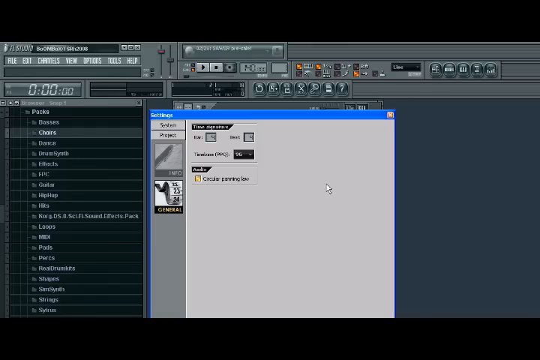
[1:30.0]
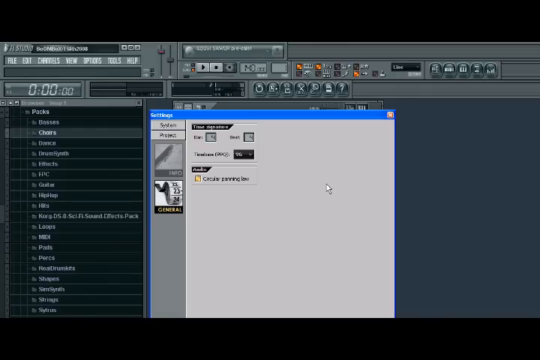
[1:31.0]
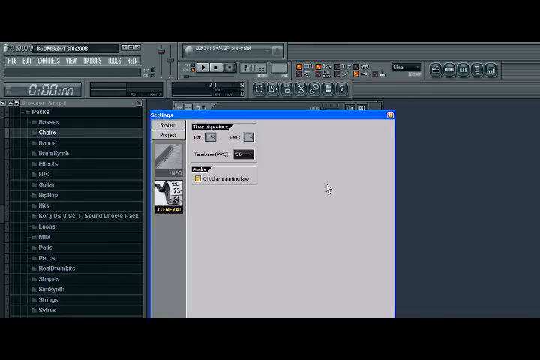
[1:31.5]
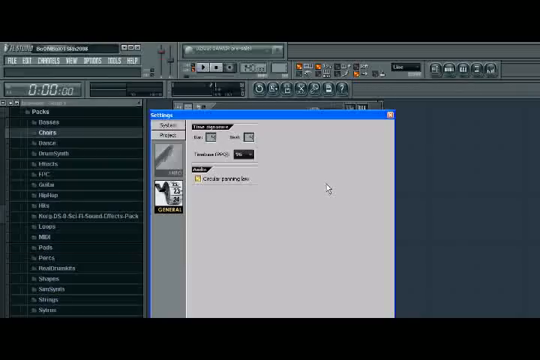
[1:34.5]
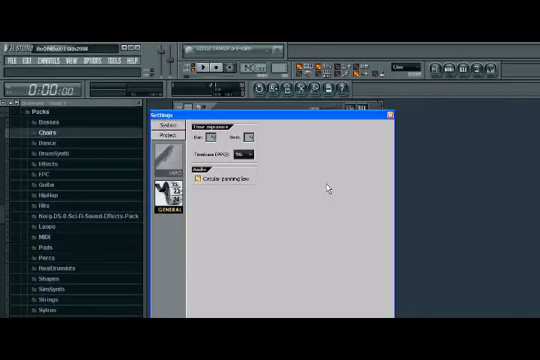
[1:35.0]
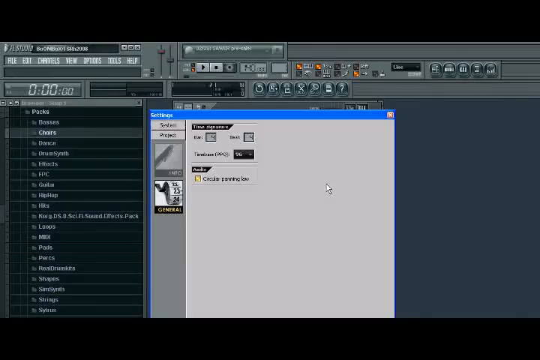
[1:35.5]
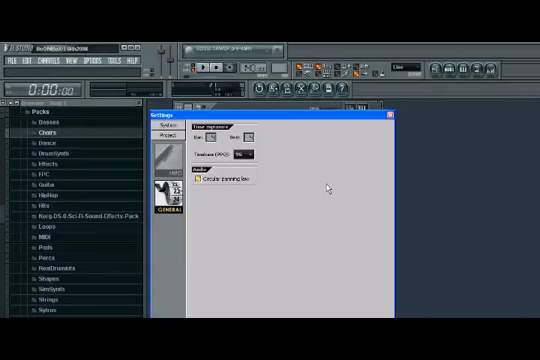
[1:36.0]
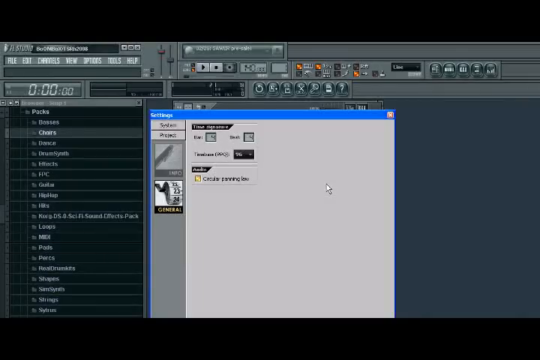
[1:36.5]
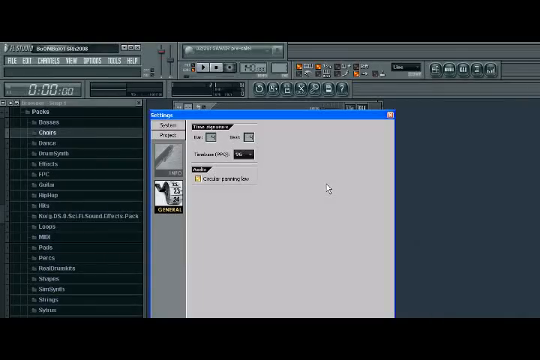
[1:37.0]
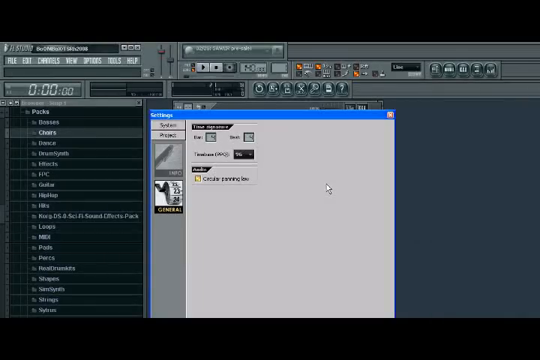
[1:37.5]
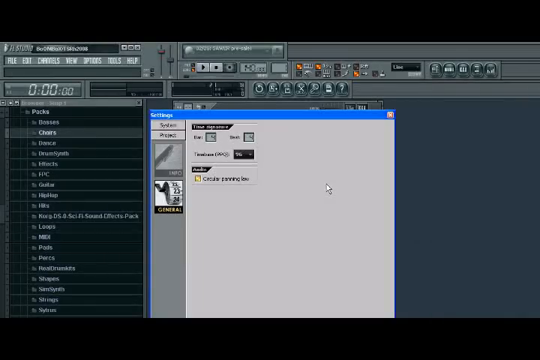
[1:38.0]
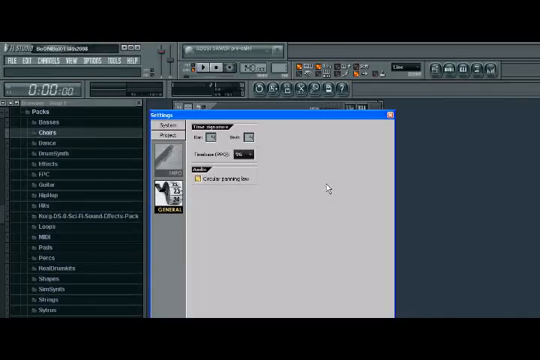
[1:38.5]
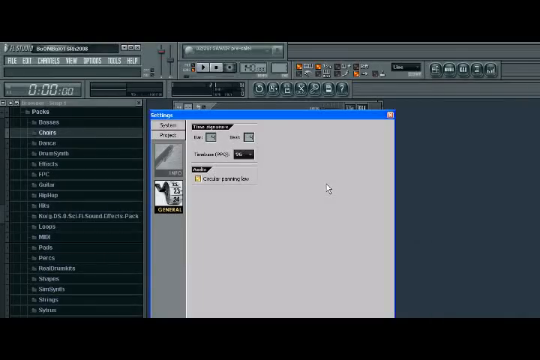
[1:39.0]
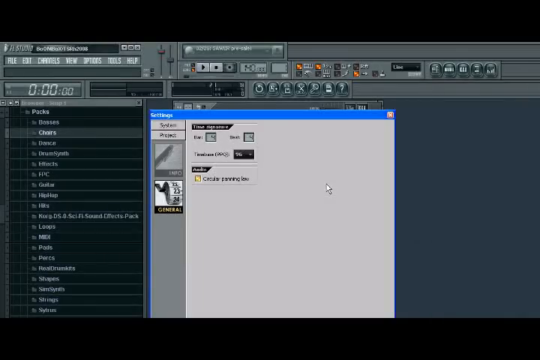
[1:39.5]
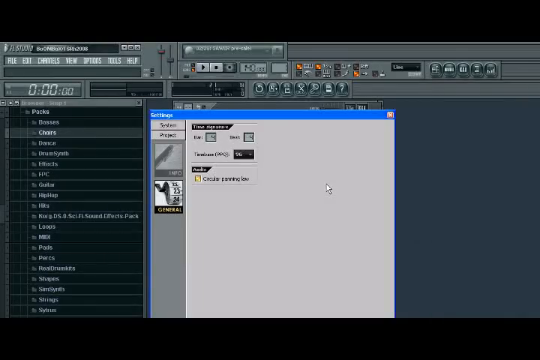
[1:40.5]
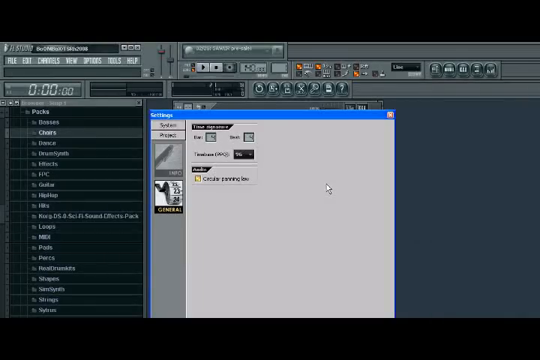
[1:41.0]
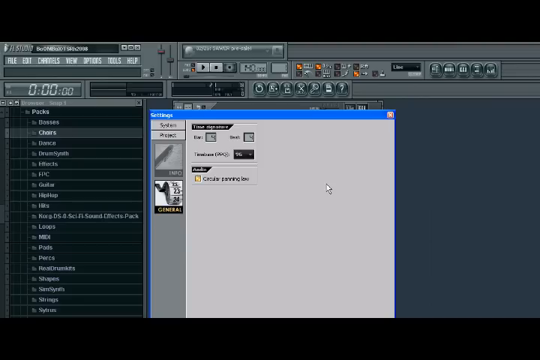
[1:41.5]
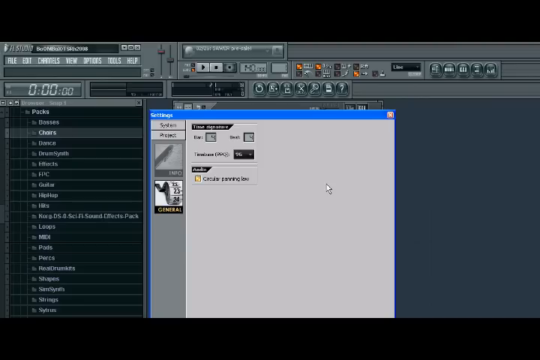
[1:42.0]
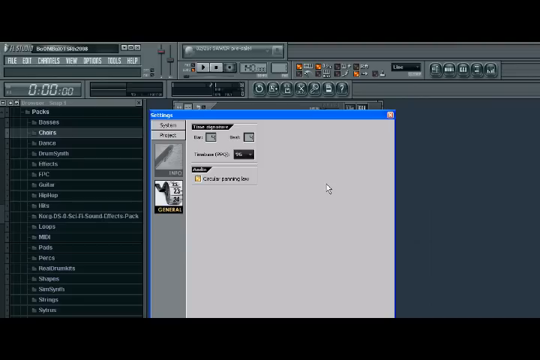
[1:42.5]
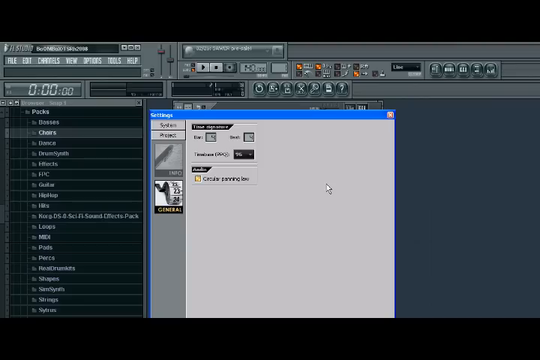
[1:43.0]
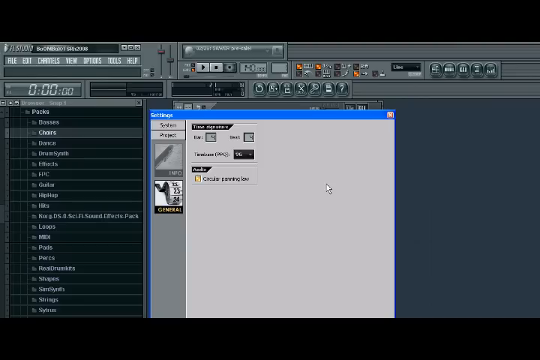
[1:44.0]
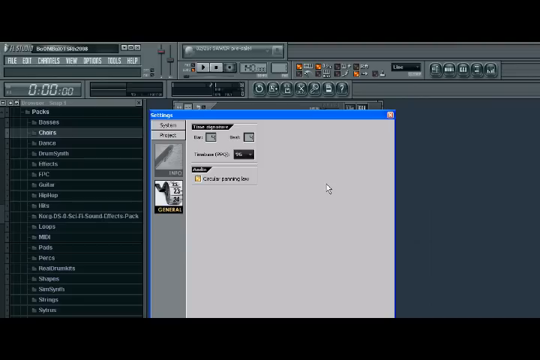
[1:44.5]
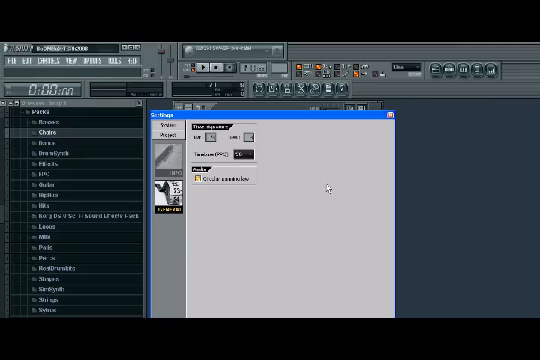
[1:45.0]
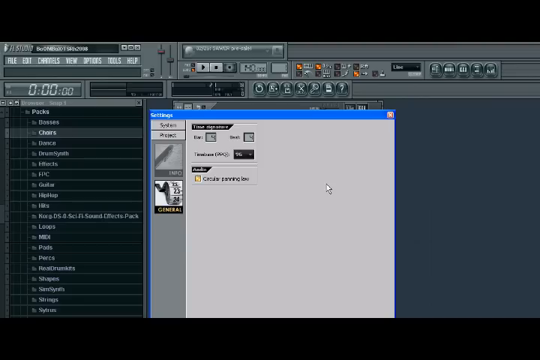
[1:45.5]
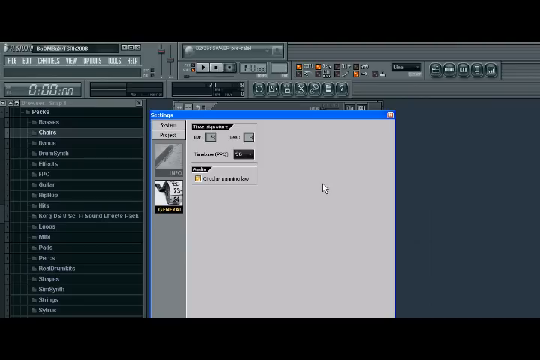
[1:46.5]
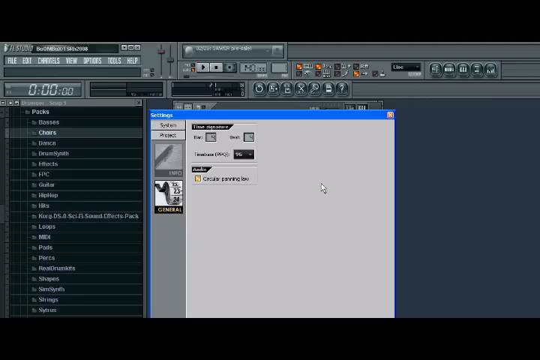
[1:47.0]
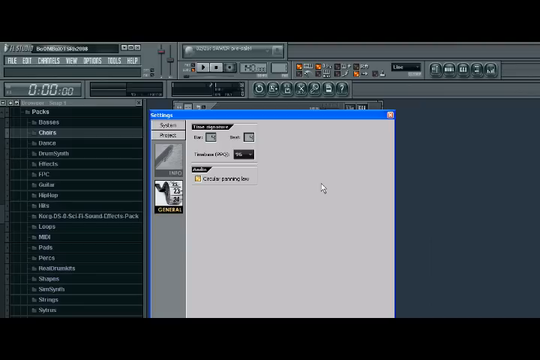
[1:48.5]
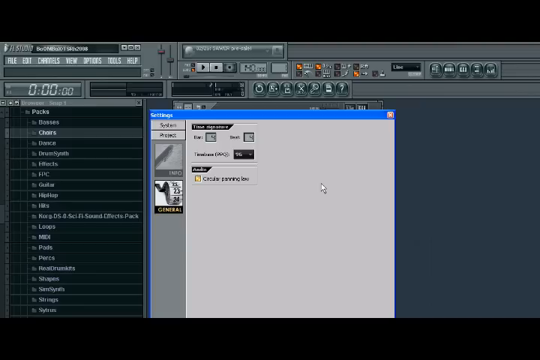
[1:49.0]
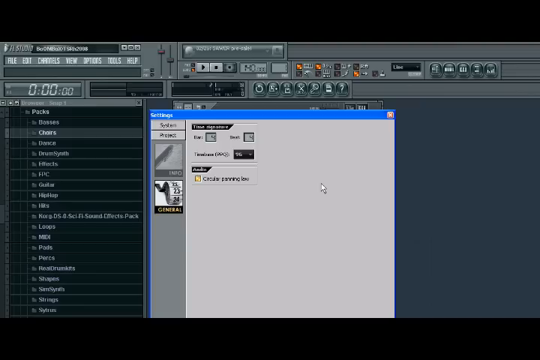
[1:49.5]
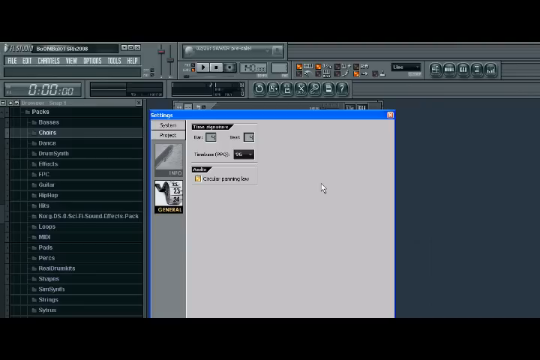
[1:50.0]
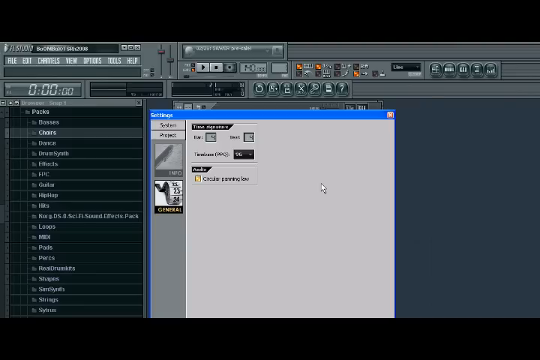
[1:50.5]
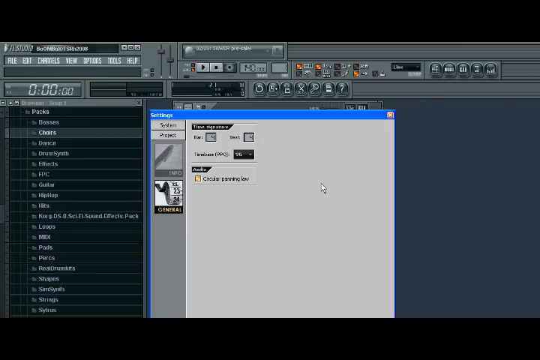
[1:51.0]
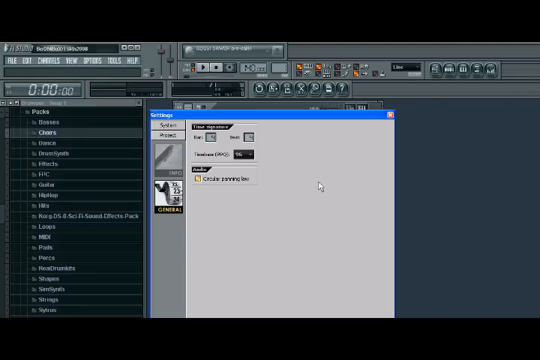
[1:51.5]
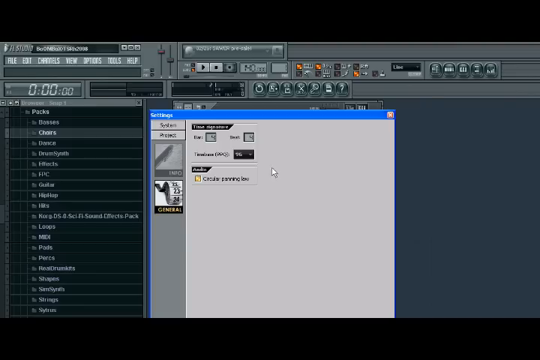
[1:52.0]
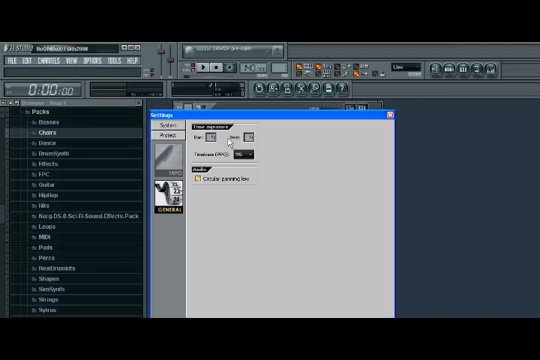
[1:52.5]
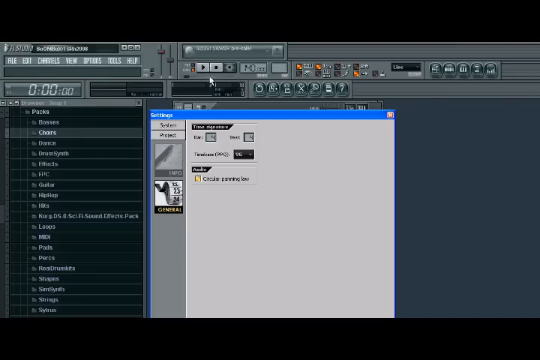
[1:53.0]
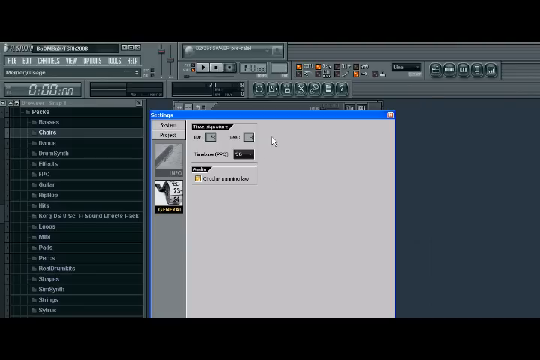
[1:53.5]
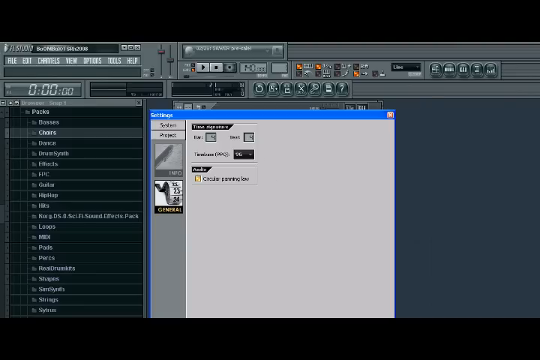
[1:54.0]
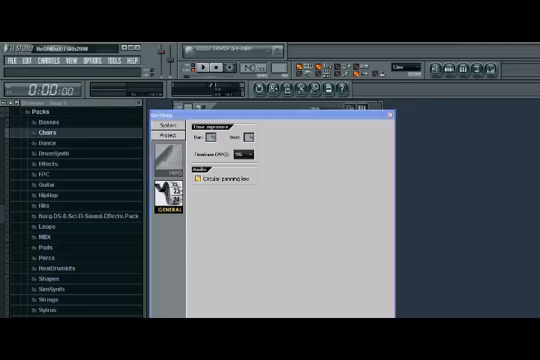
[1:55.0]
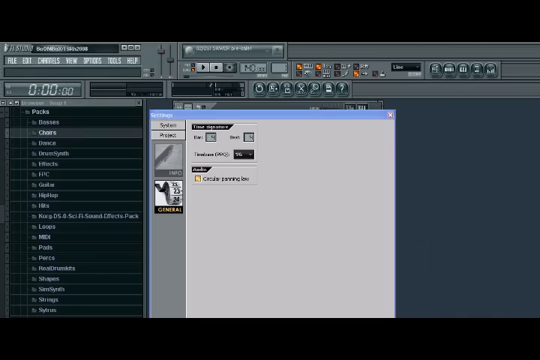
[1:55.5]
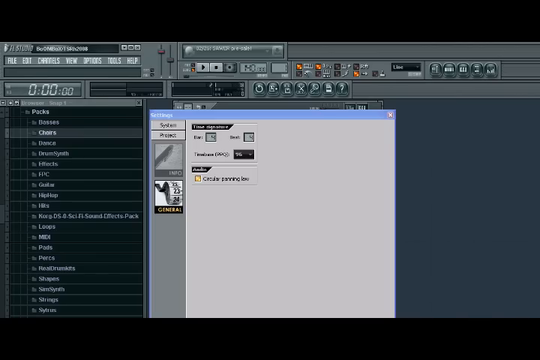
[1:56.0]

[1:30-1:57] The library settings page remains open in FL Studio, with the cursor hovering in a sort of light gray empty area of the page. The cursor moves a tiny bit to the left of the box and stops. It then moves again, going to the stop button, possibly to stop a track, or near the header at the top area of FL Studio. No people, animals or physical objects appear; the only changes are the screen transitions and the cursor moving around the FL Studio application.